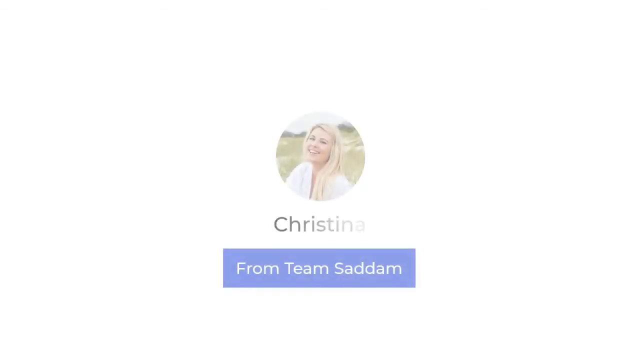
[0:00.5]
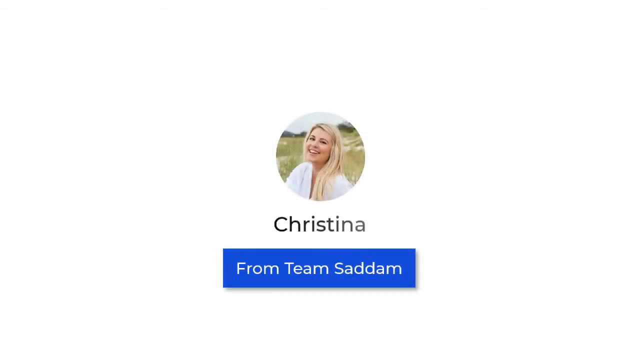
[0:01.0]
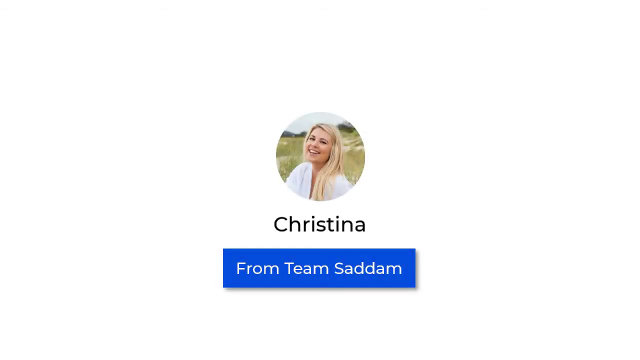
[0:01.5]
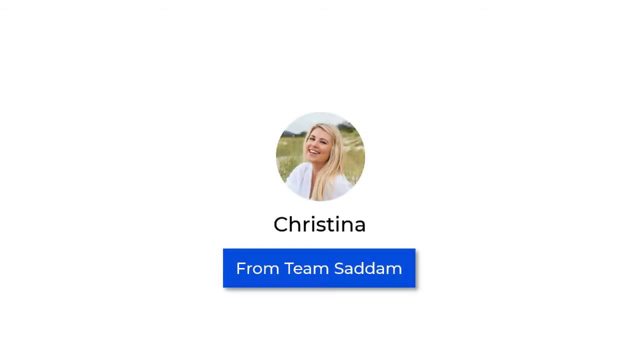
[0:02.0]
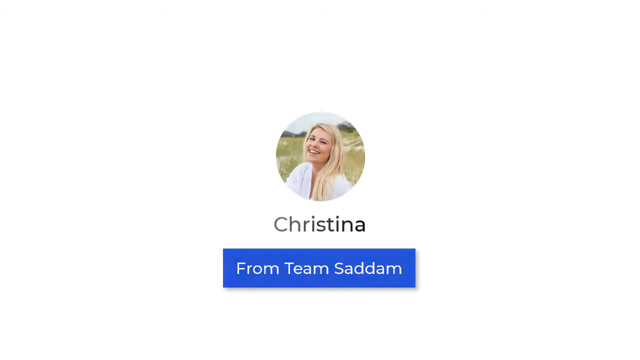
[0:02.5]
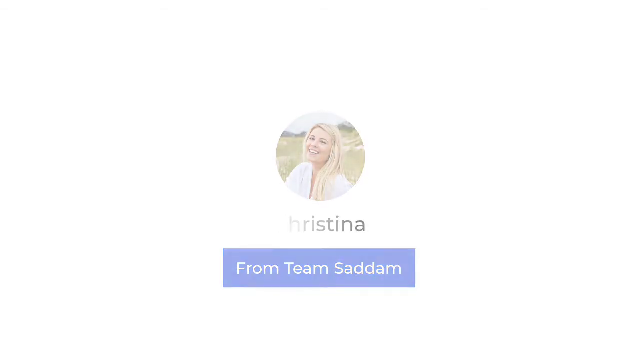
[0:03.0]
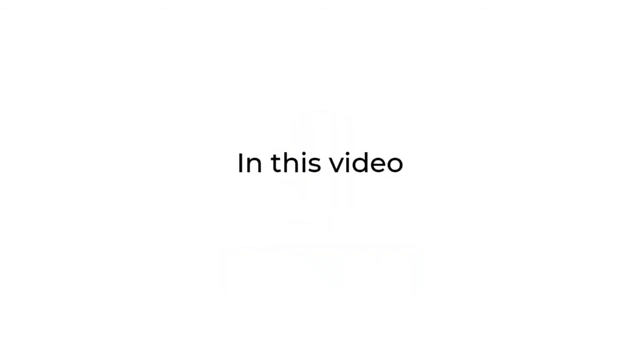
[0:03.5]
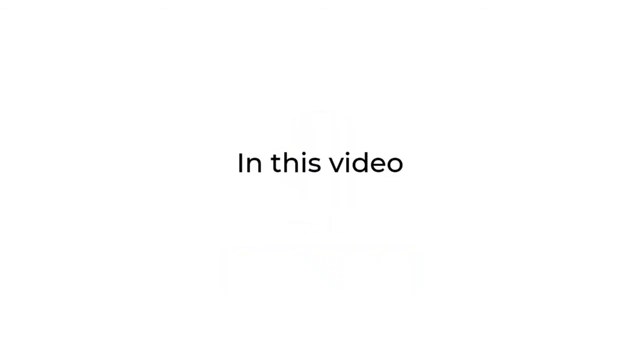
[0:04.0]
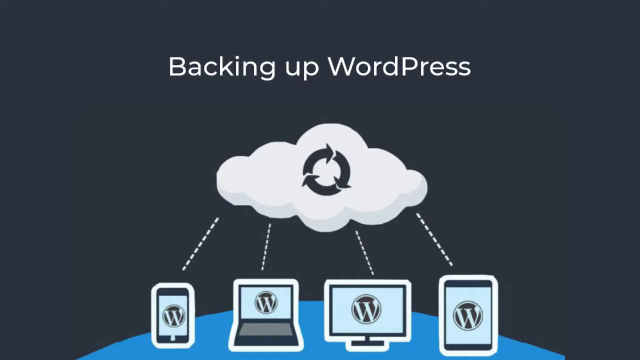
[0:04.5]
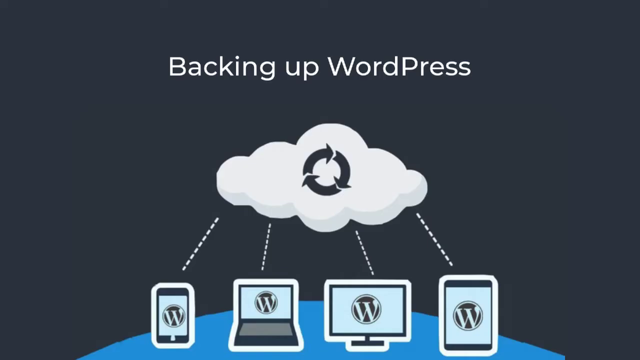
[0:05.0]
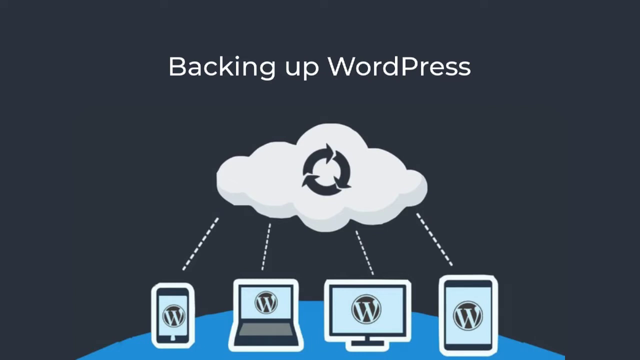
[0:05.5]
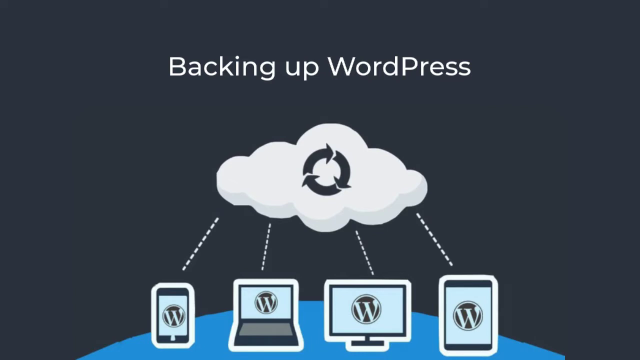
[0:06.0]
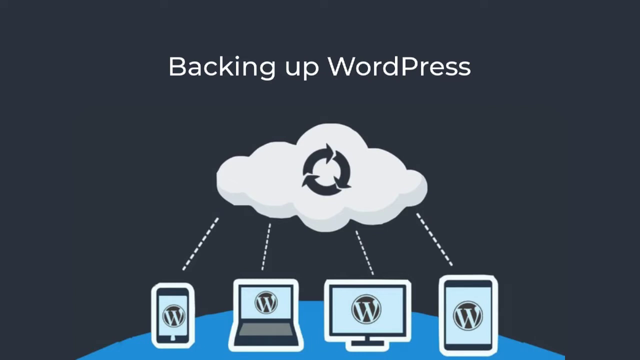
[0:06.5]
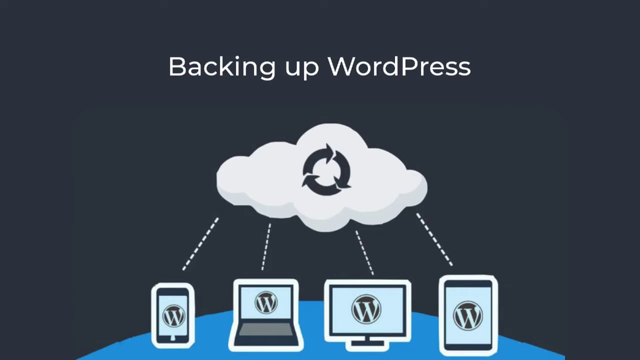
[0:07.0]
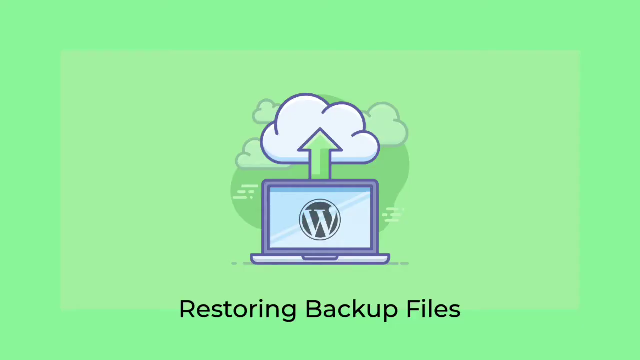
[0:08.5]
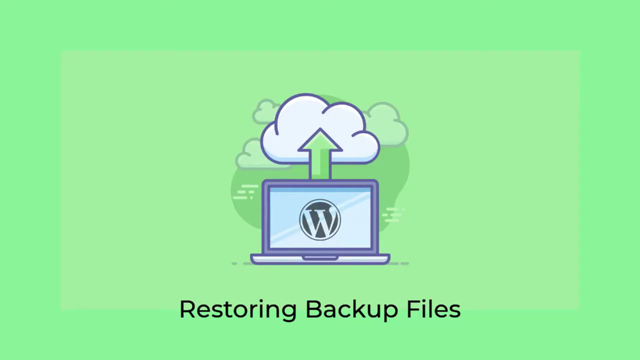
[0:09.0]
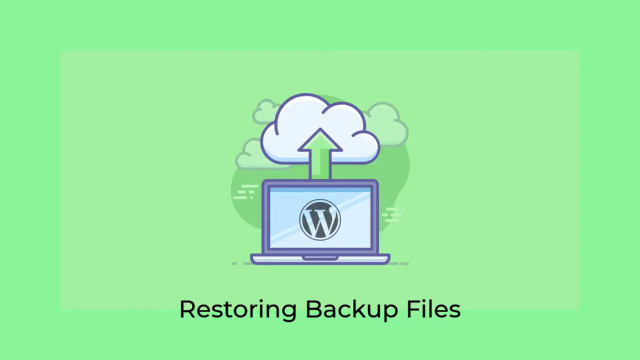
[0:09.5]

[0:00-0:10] The video opens with a picture of a white woman named Christina, her profile picture shown in a circle with a nature background behind her. Underneath, "From Team Saddam" appears in white text with a blue button. The screen then changes to read "In this video" and "backing up WordPress" in white text. Below that text is a white cloud with dotted lines pointing toward different devices bearing the WordPress logo. After that, "Restoring backup files" appears in black text on a mint green background, with the WordPress logo on an illustration of a laptop. Above the laptop is a green arrow pointing toward a cloud, and more clouds fill the background of the digital illustration.